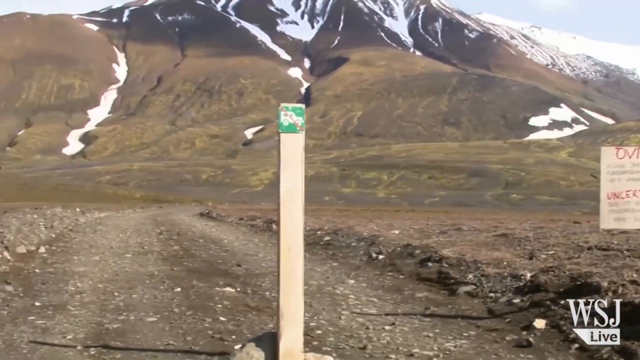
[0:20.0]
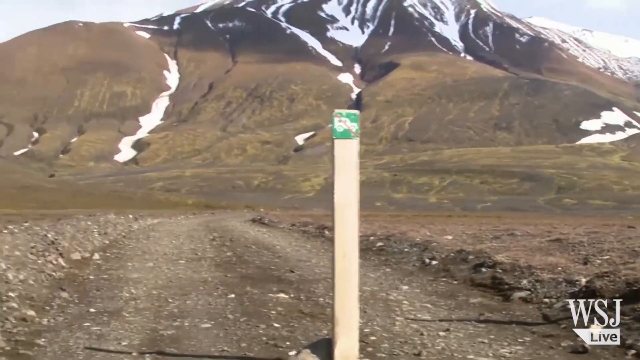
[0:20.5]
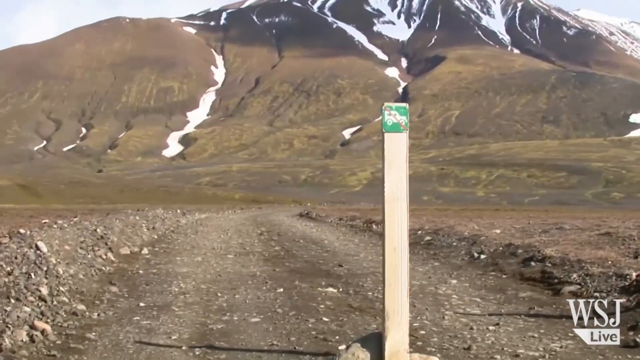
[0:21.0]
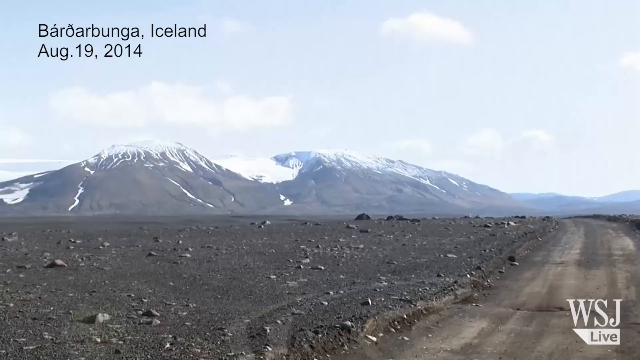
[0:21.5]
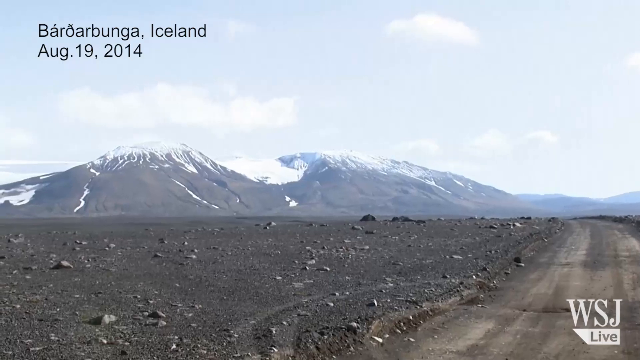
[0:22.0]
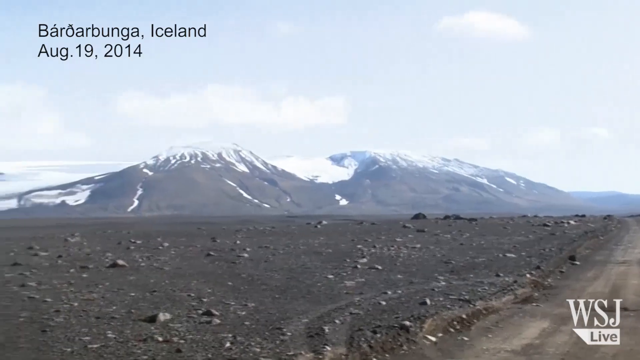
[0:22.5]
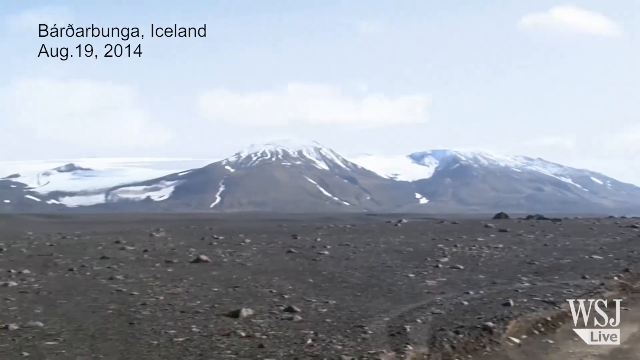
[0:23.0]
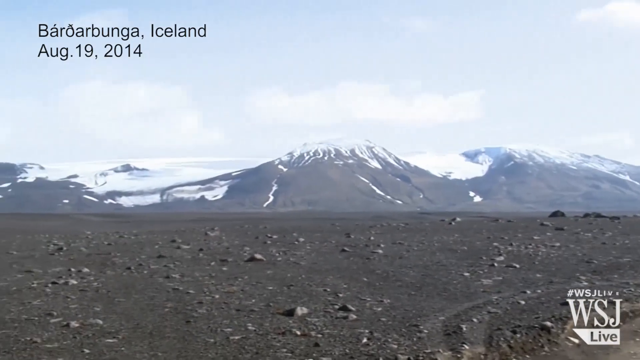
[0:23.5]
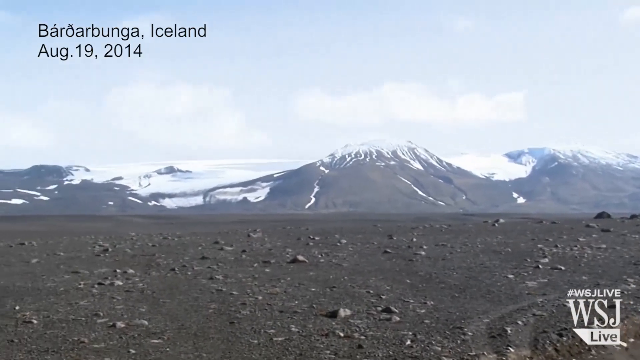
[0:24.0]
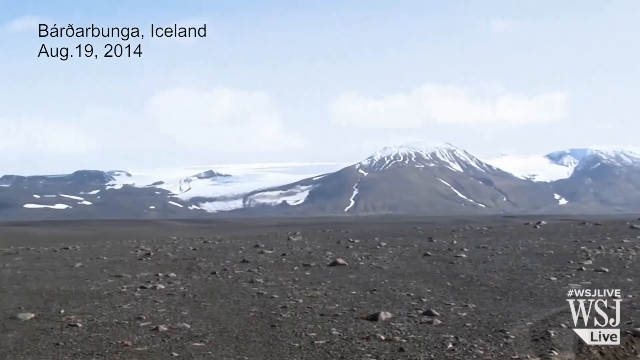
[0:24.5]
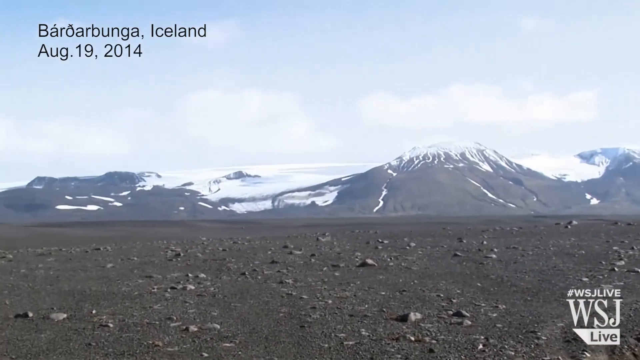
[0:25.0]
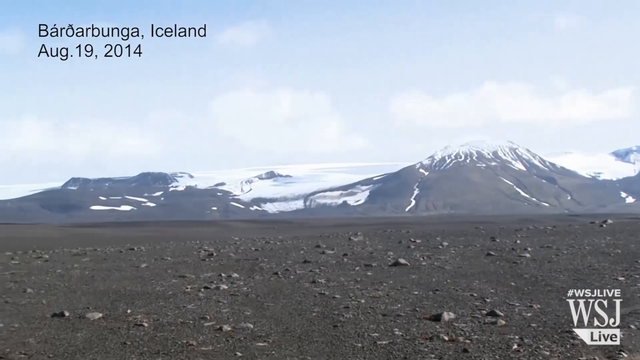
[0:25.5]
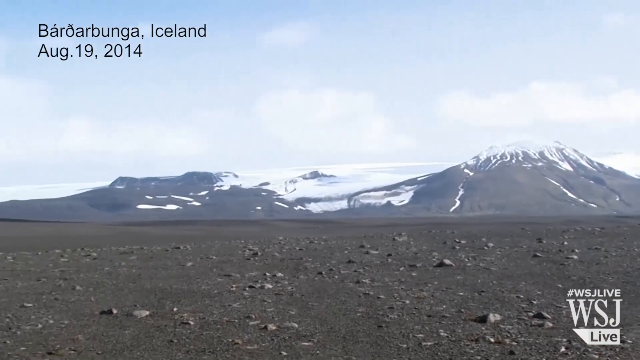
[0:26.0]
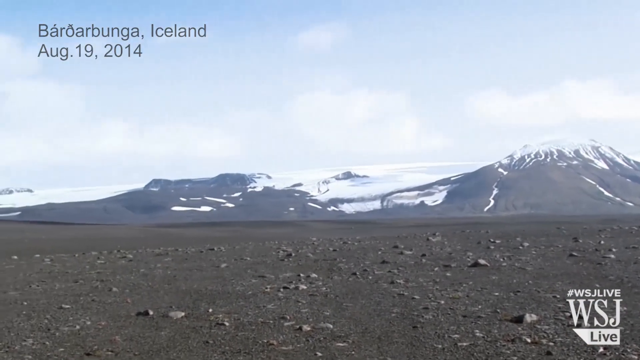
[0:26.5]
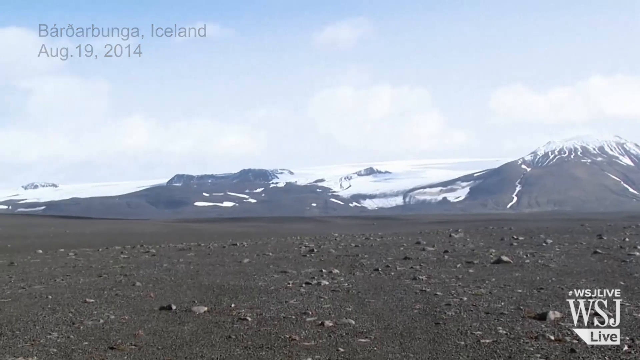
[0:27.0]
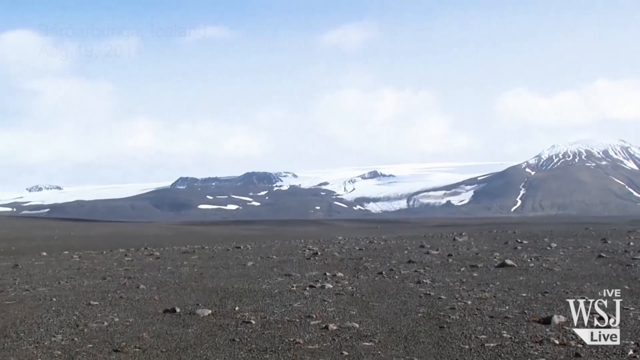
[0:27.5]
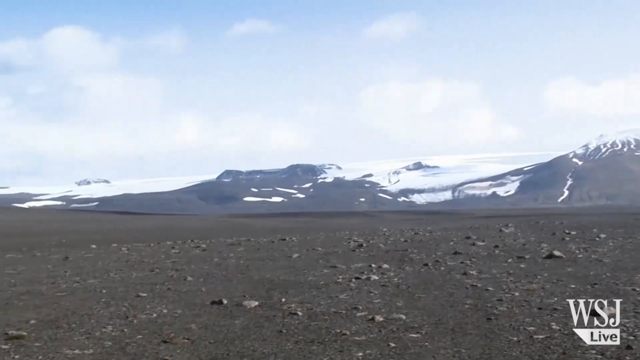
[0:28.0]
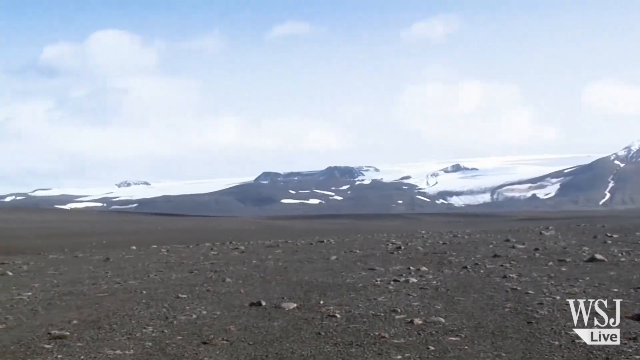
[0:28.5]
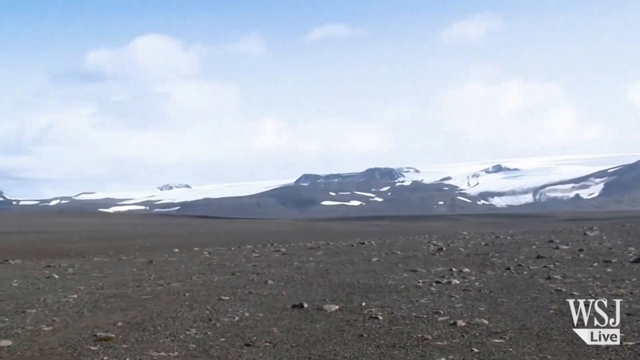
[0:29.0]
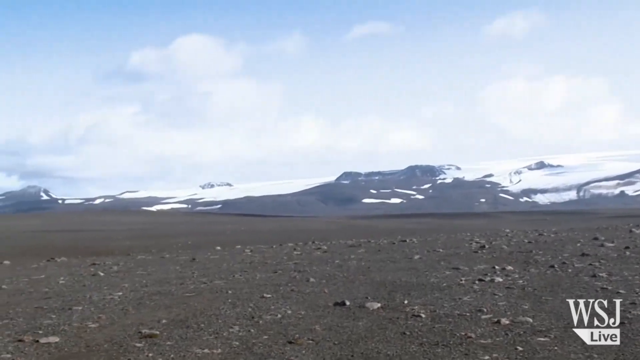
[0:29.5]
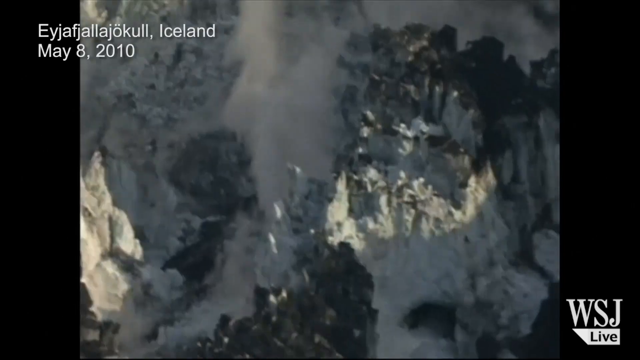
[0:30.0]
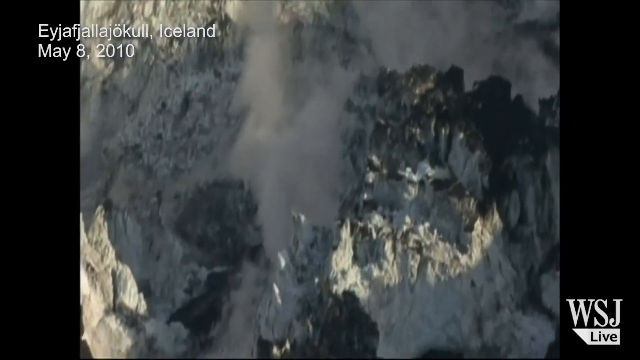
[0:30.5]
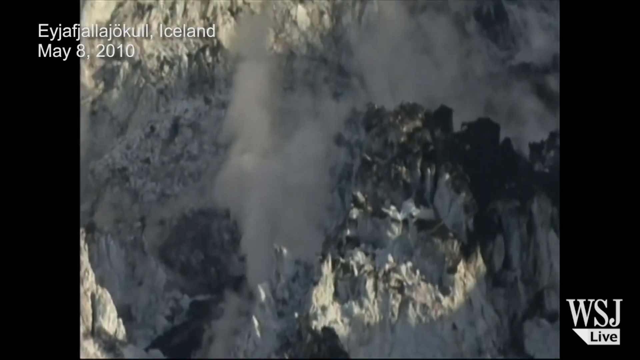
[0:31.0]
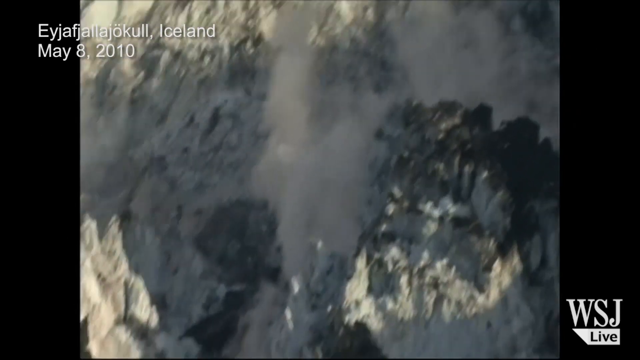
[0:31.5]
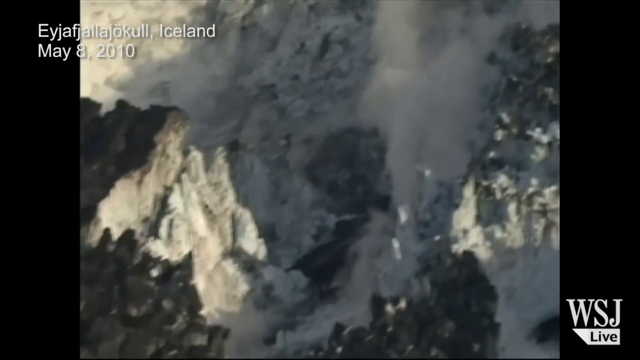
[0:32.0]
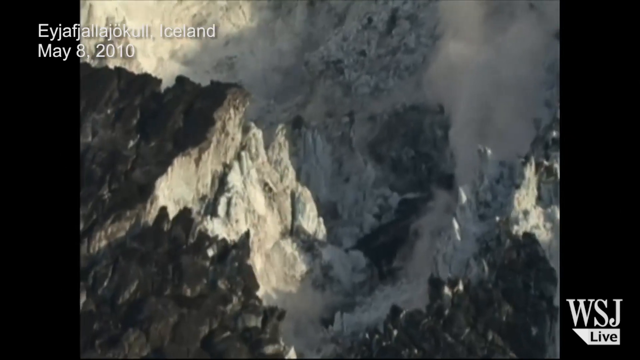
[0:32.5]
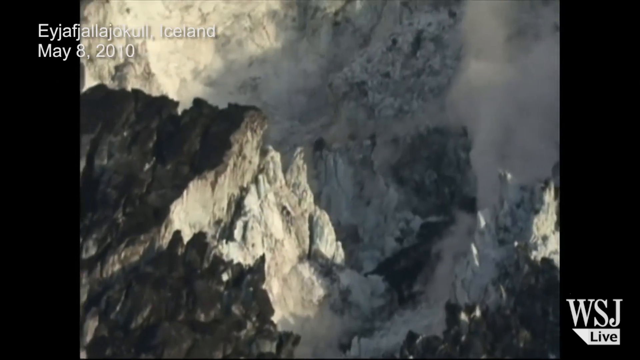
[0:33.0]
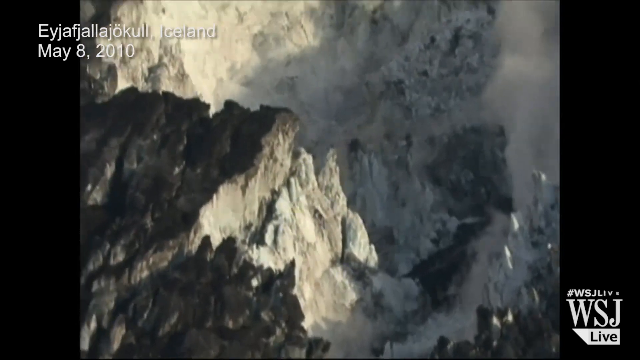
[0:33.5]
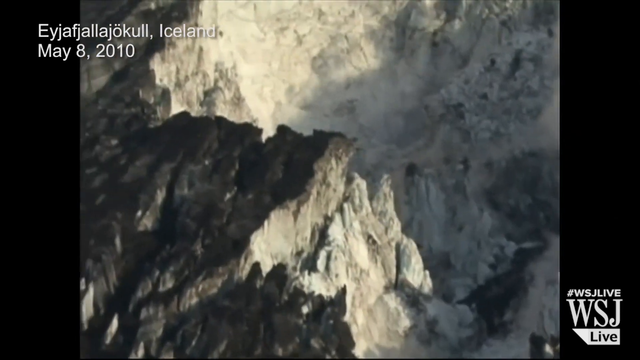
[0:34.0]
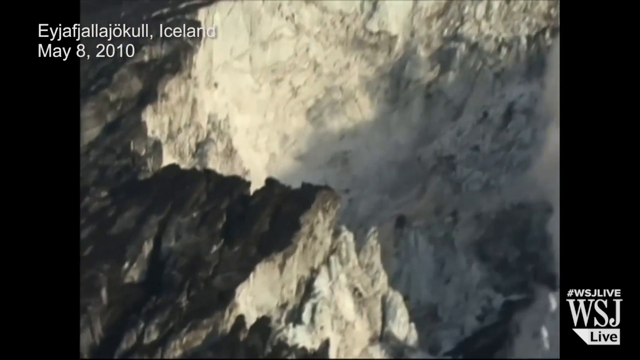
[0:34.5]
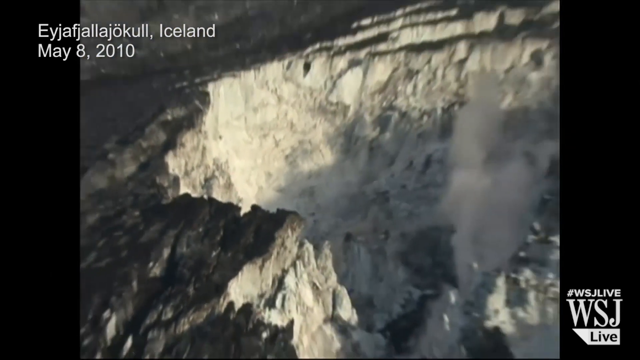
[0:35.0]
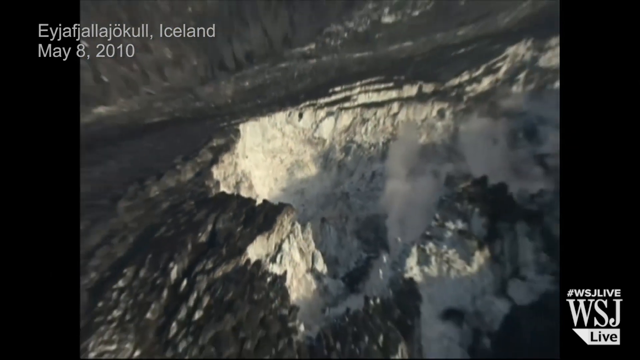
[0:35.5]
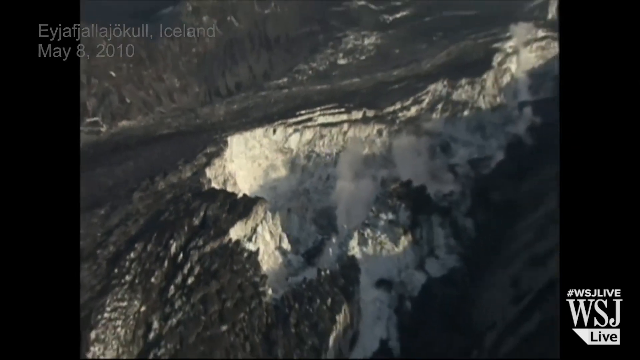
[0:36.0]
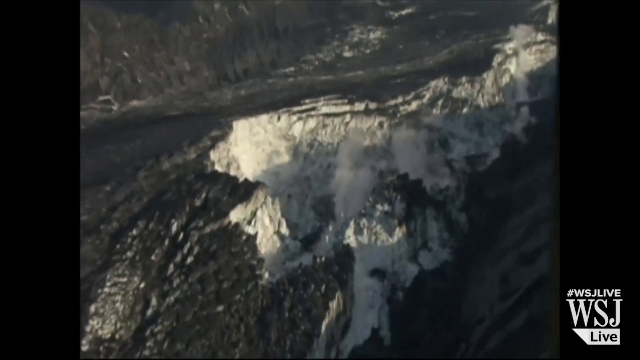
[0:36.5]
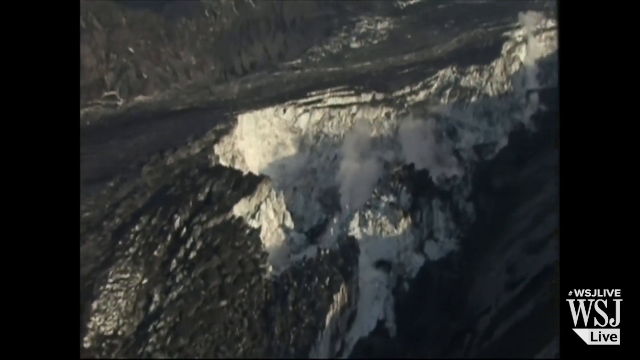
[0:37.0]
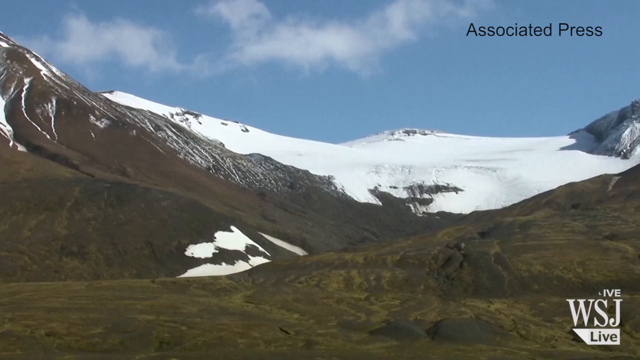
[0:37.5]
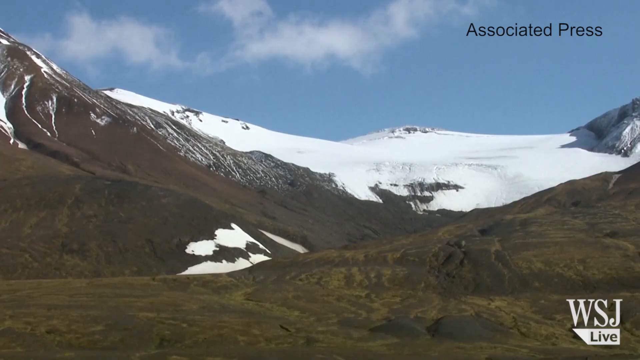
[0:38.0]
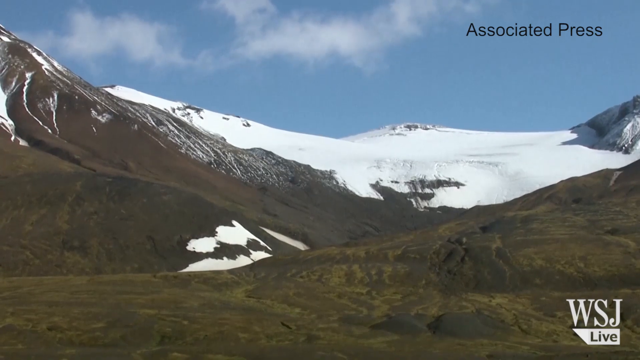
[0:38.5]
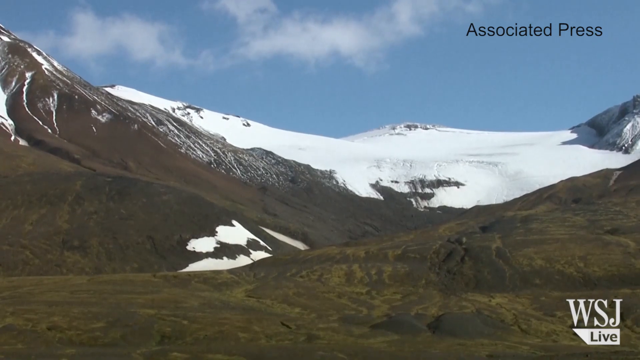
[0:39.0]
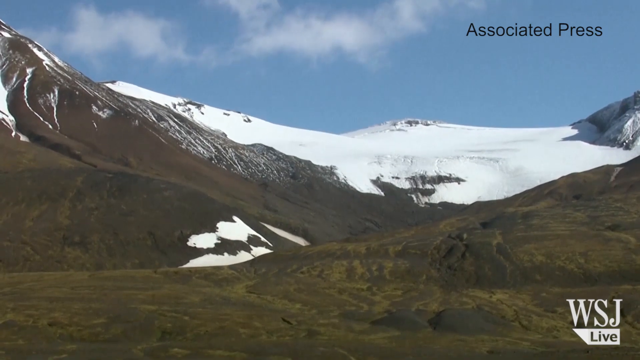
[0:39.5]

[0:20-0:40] The same outdoor location is shown from the ground, with a large mountainscape in the background. The mountain is greenish brown at its base, darker brown higher up at the top middle, and a lot of very white snow covers the very top and extends to the right. Closer to the camera, the ground is a dirt-like brownish color. A single light brown wooden plank goes vertically up on the road, with a small green sticker at its top that appears to have a little drawing of a car on it. On the far right is the light brownish sign with red and black text in a foreign language, apparently Swedish. The camera slowly moves to the left before the scene switches to a different area with a more grayish tone. At the top left, the location is given as "BAROARBUNGA, Iceland," with the date "August 19th, 2014" listed below. The camera seems to focus, and in the distance is a large mountainscape covered in white snow near the tops. The ground is blackish, very flat, with many rocks on it. The camera slowly moves to the left, revealing more of the mountainscape. The video then moves to a different location in Iceland, dated May 8th, 2010, in what looks like an aerial view; as it zooms outward, more of the mountain area comes into view. Finally, the scene changes to a calmer-looking mountainscape of greenish brown mountain land, with snow on the top at the middle right, under a very blue sky with clouds running diagonally from the top middle to the top left.